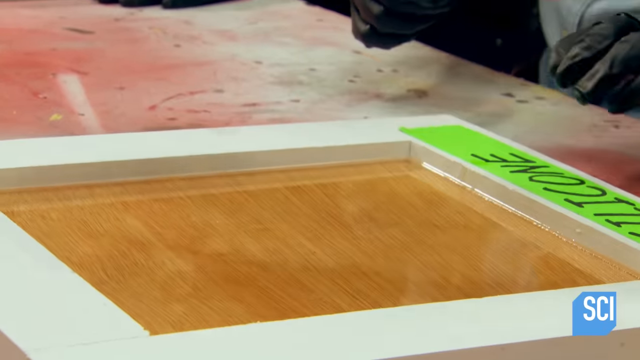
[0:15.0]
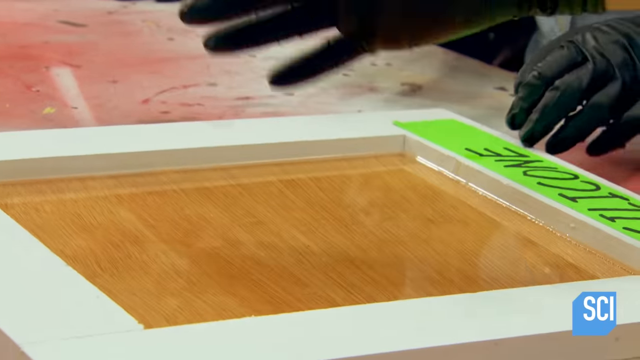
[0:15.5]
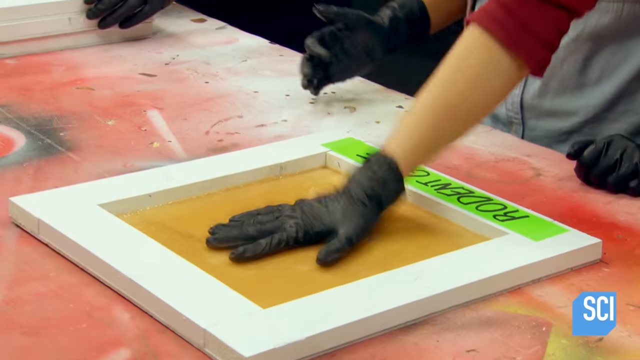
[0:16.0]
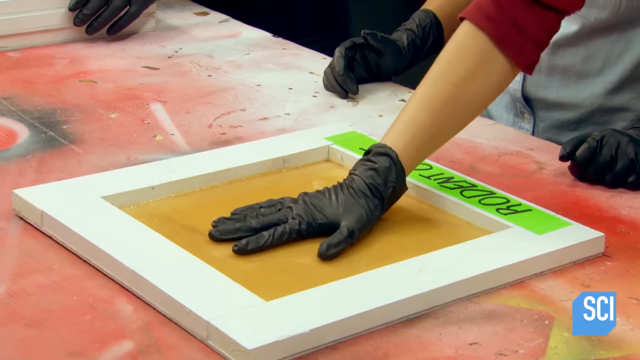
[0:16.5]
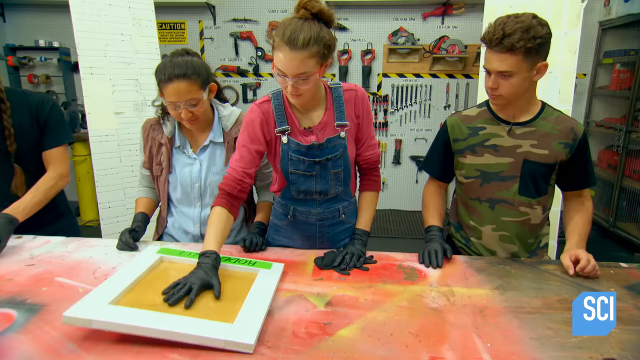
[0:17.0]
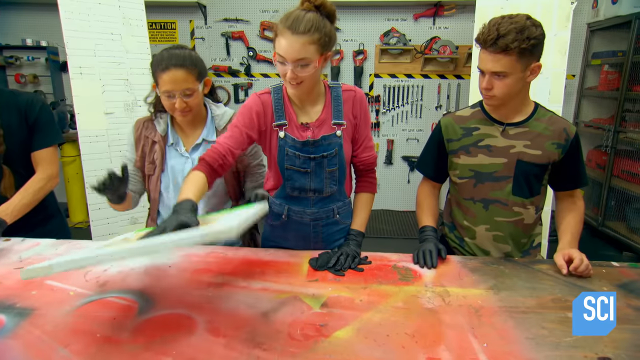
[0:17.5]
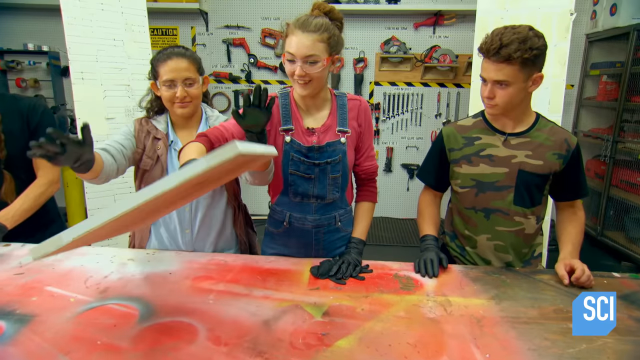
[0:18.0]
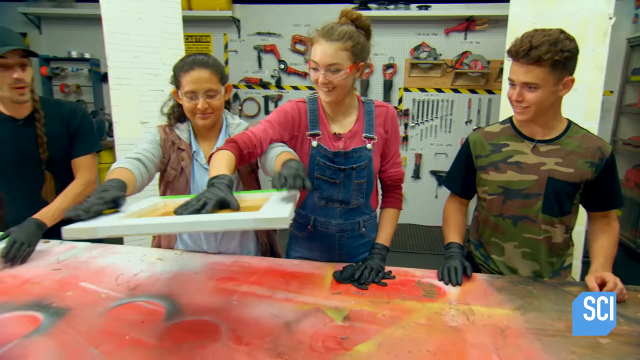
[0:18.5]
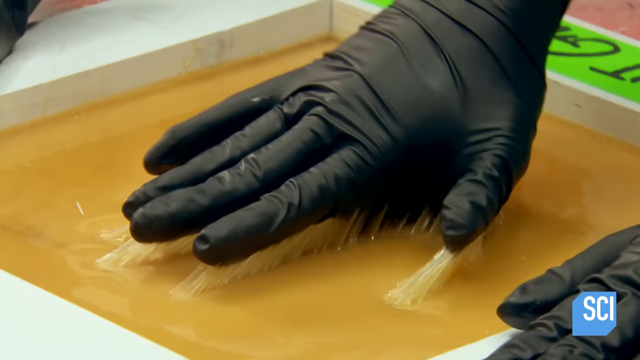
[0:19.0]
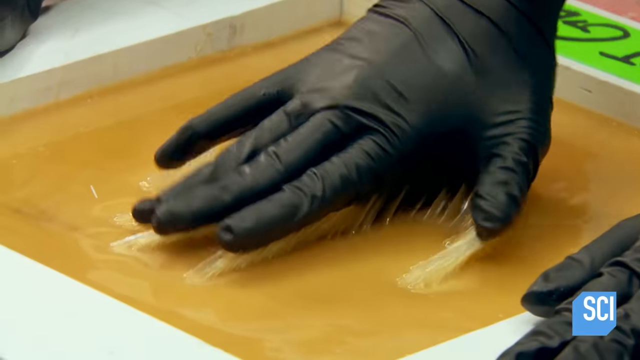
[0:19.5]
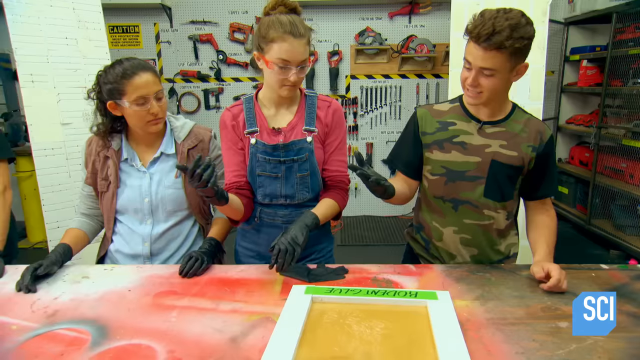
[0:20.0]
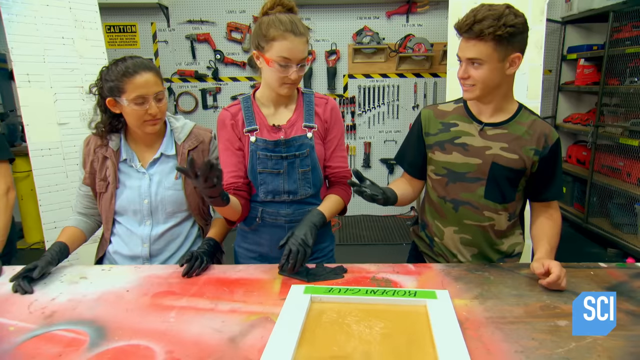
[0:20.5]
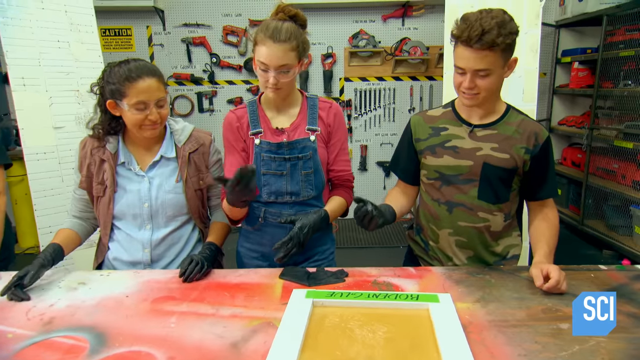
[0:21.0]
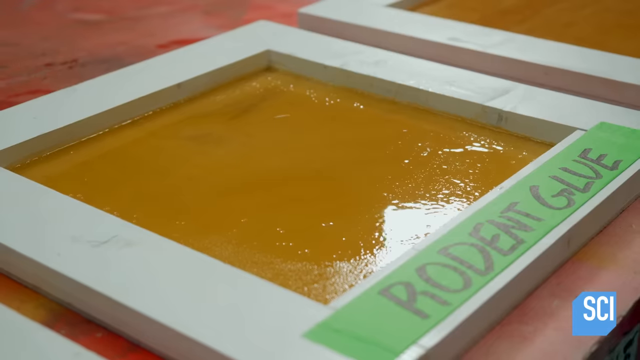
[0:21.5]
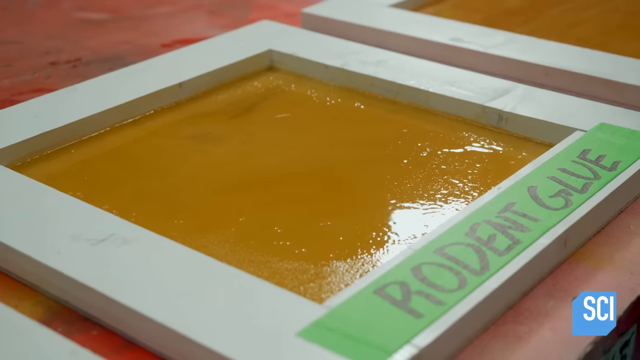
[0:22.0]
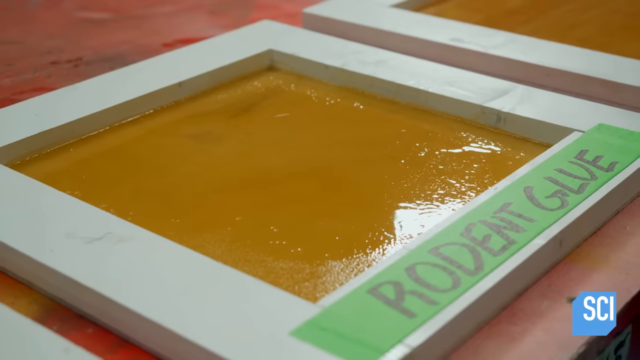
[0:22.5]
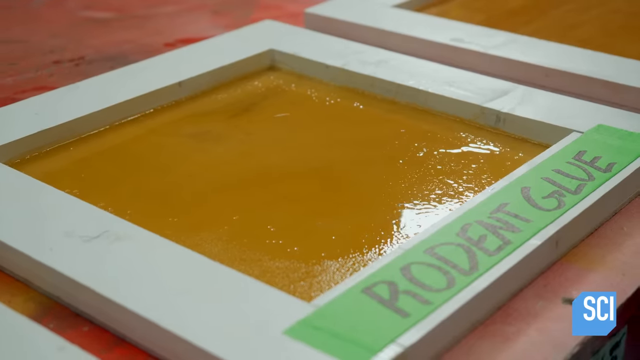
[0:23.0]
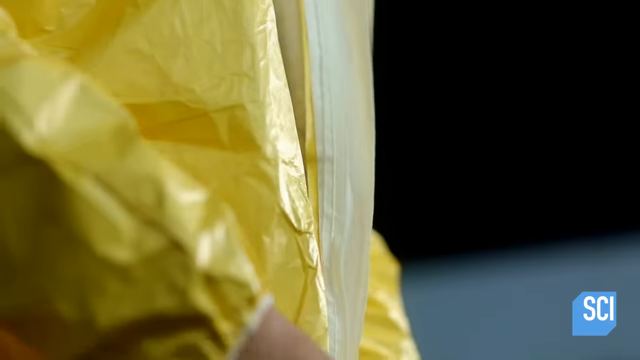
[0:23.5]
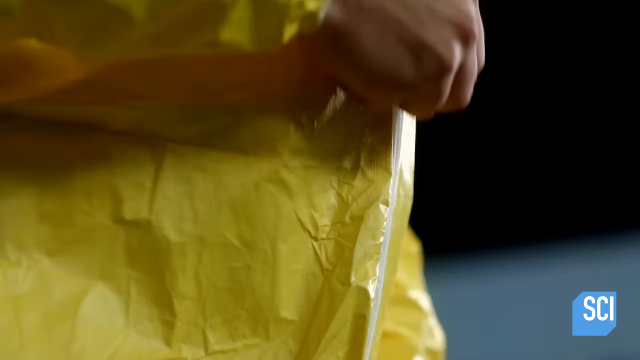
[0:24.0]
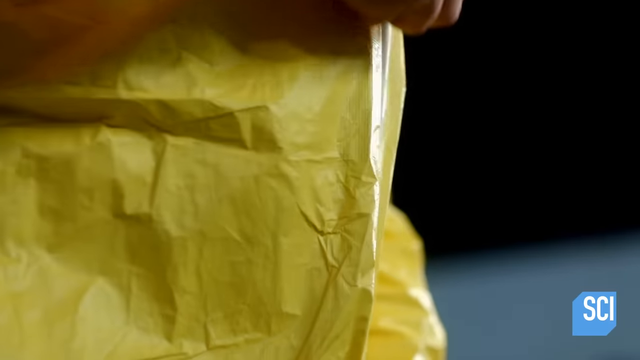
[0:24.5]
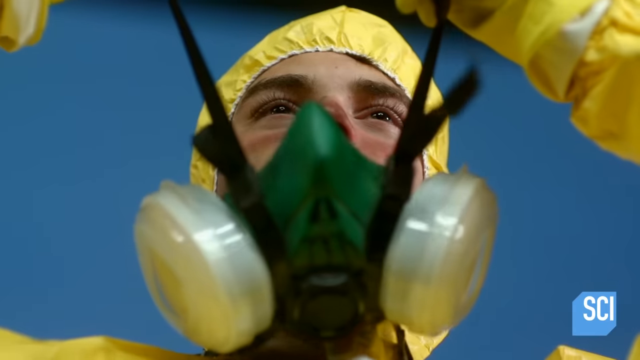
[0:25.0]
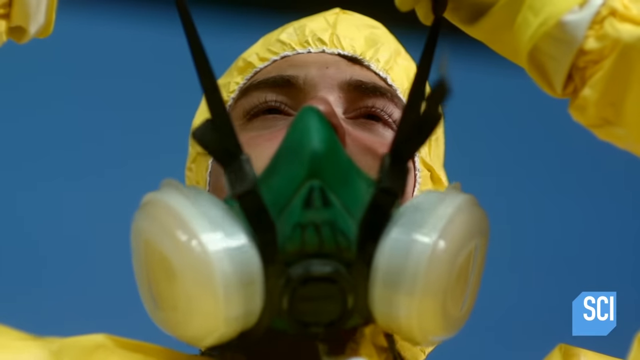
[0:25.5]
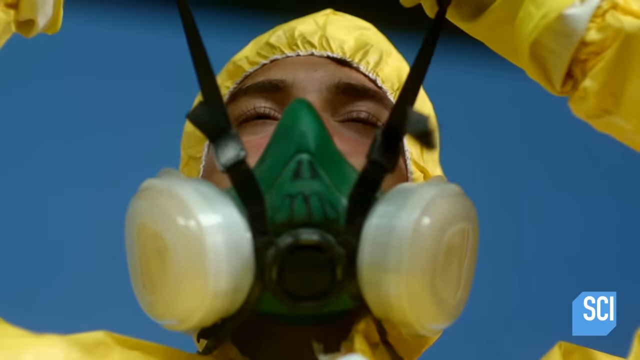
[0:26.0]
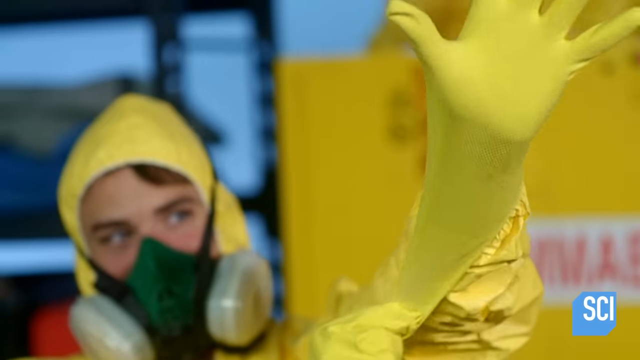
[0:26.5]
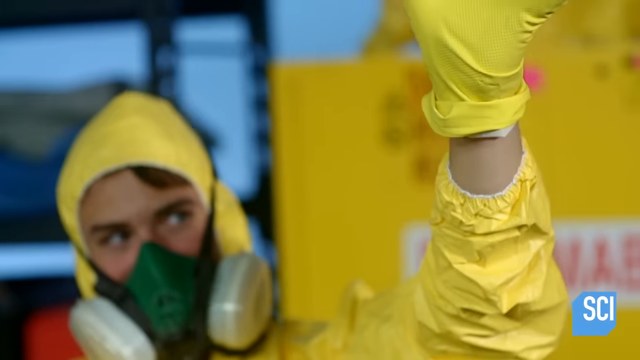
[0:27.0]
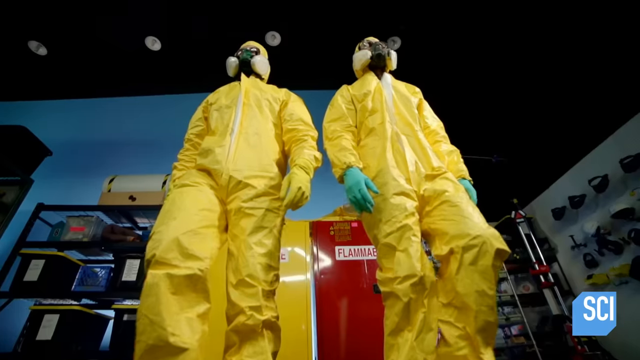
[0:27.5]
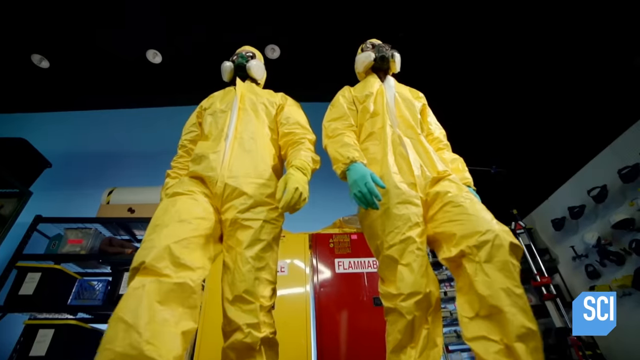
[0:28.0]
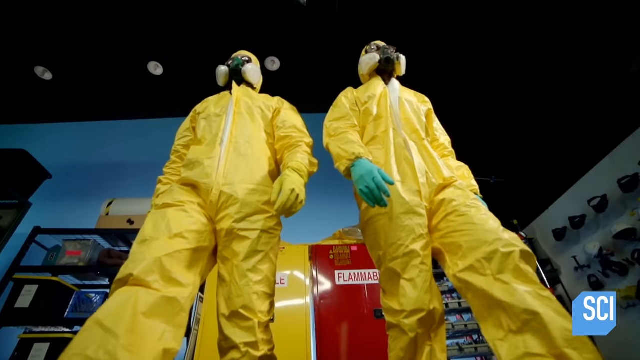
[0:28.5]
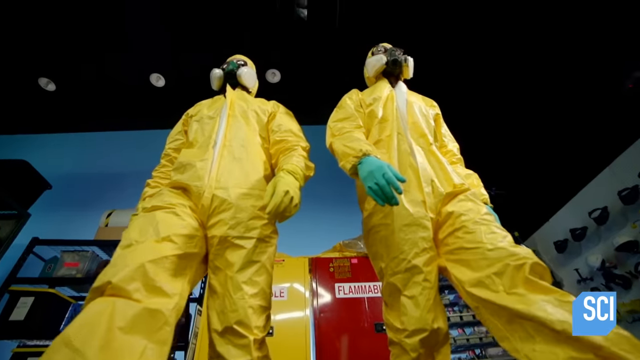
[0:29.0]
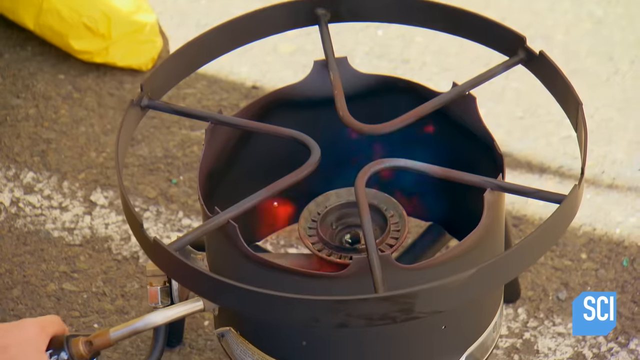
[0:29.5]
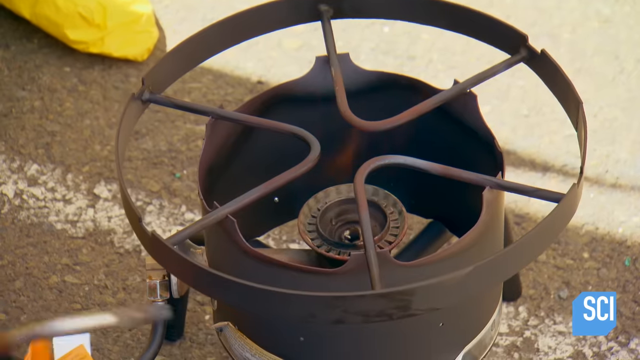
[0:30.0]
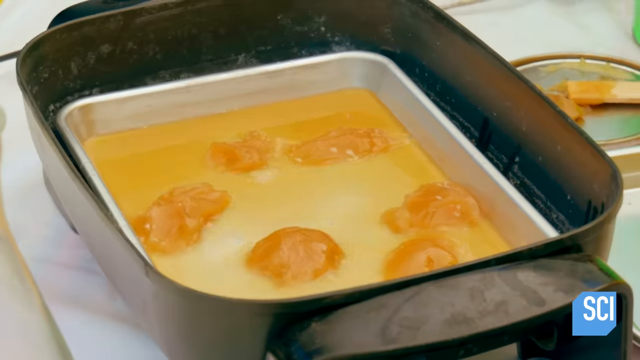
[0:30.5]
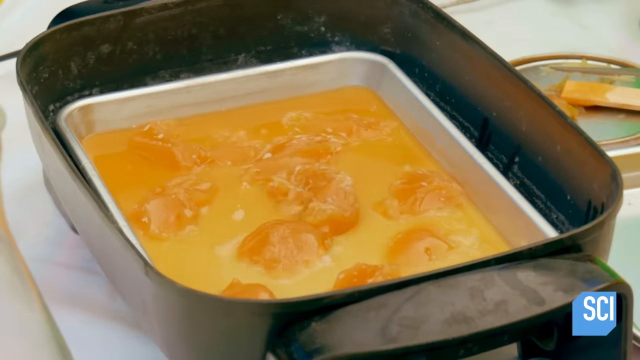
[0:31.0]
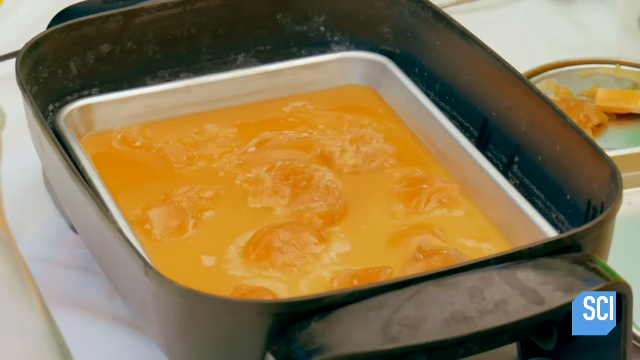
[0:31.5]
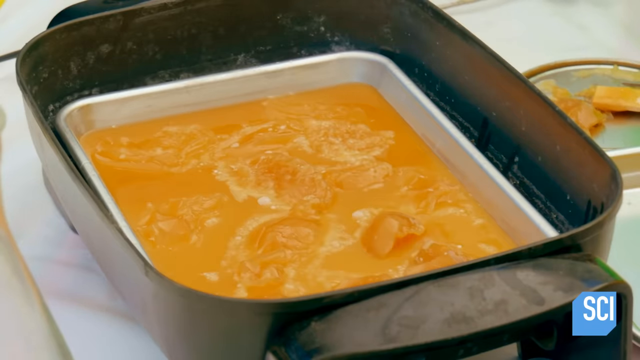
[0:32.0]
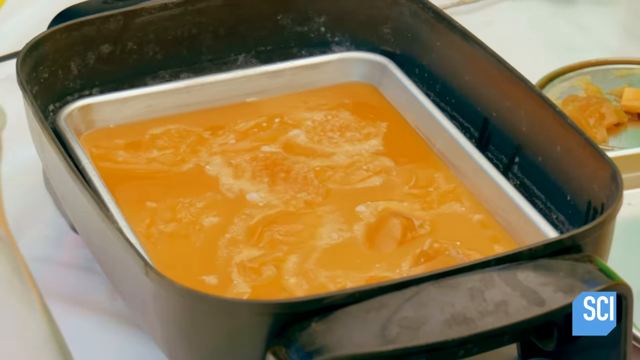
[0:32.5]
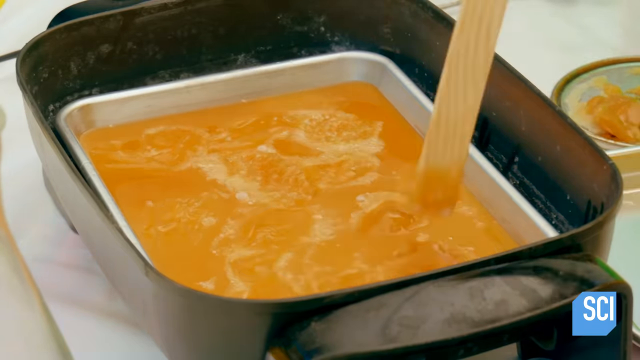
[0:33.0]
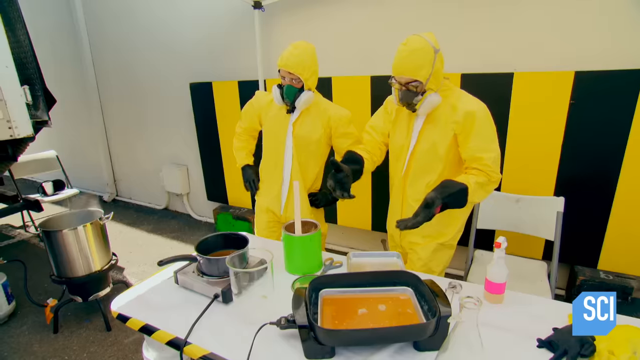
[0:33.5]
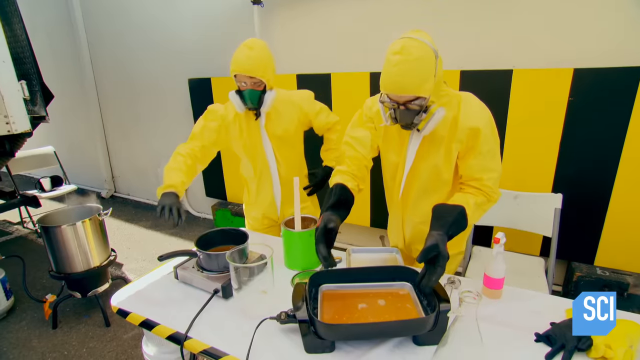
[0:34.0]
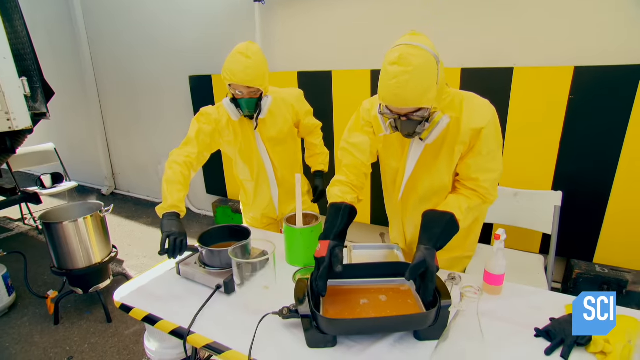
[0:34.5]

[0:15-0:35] Besides the can of rodent trap glue, there are three smaller white cups that they pour liquid into. The shot cuts to the tabletop from overhead, showing three frames, and closer up there is glue on those frames. One frame is at the center of the table. The three teens are all wearing black rubber gloves. The girl in the center places her hand on the frame to show how sticky it is, and the girl to her left attempts to pull it off her hand but is unable to. She then places the frame back on the table and tries to pull the glove away as the camera gets a close-up. Two other frames hold other types of glue. The video cuts to the young man putting on a yellow hazard jumpsuit and a hazard mask. The camera pulls out, showing that one of the other teens has suited up in the same fashion, and they walk toward the camera as they are shot from below. The camera then moves to a small camp cooker being lit and a pot being placed on it. In a different workspace, the two teens in hazard suits are heating chunks of glue.